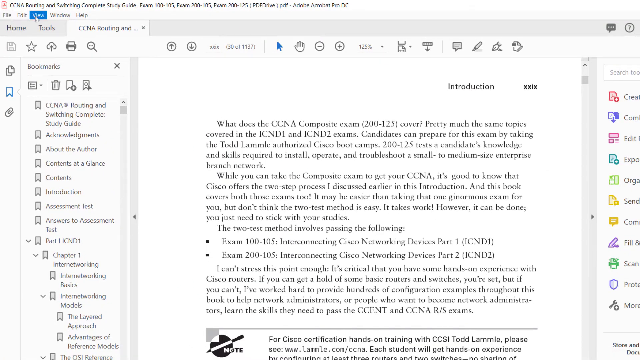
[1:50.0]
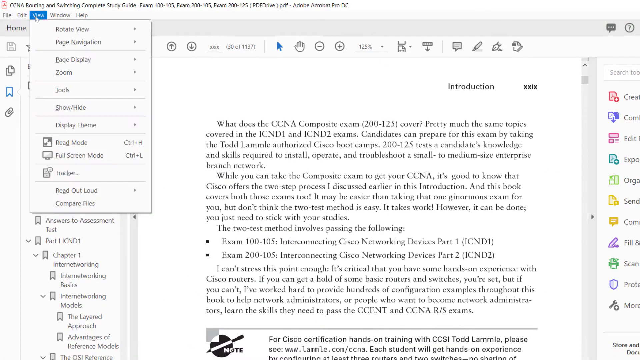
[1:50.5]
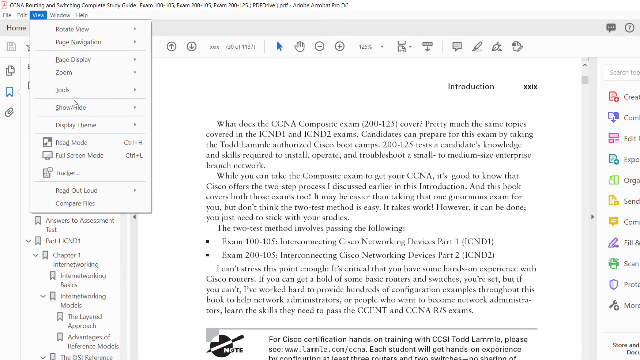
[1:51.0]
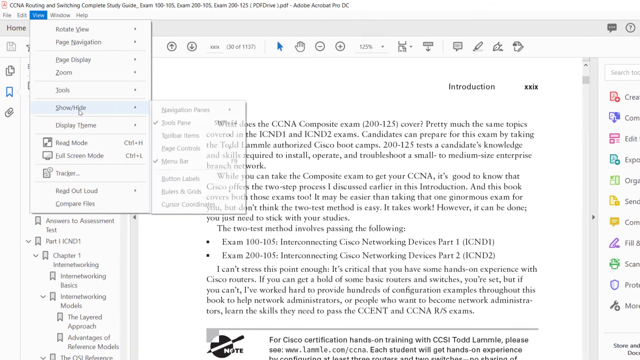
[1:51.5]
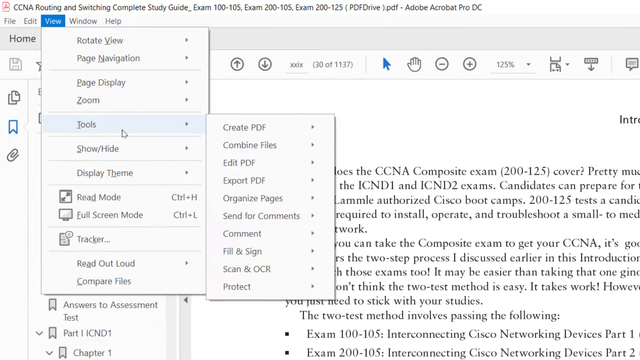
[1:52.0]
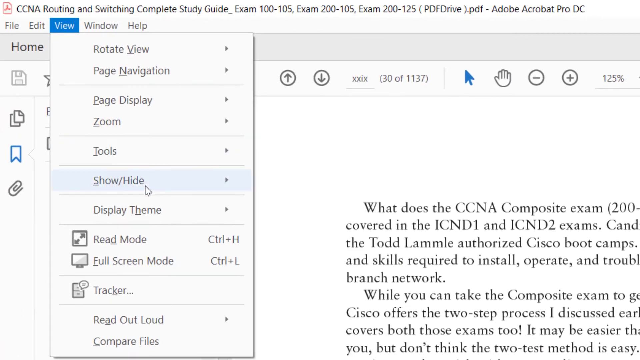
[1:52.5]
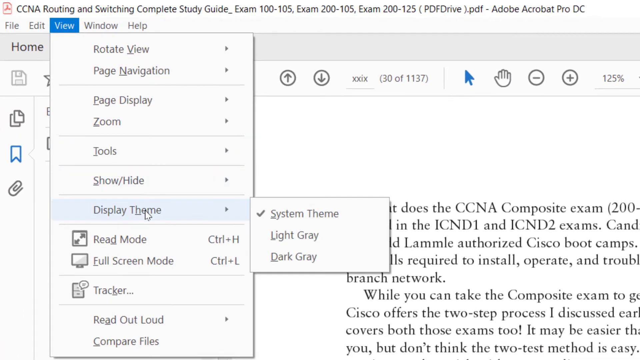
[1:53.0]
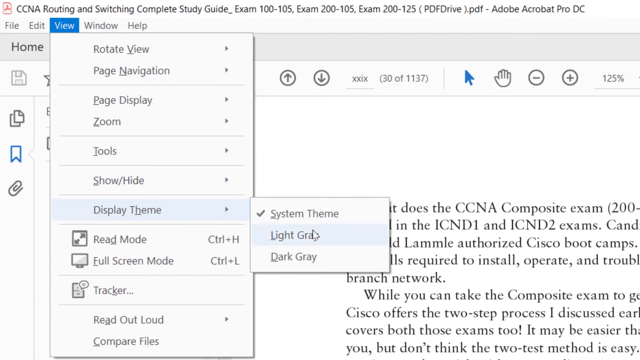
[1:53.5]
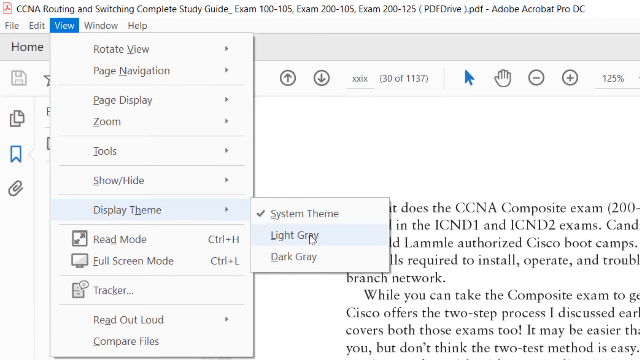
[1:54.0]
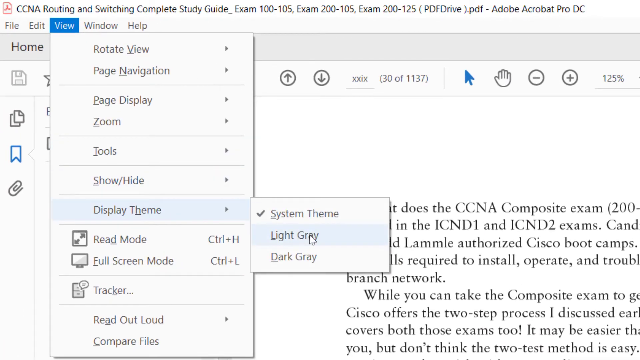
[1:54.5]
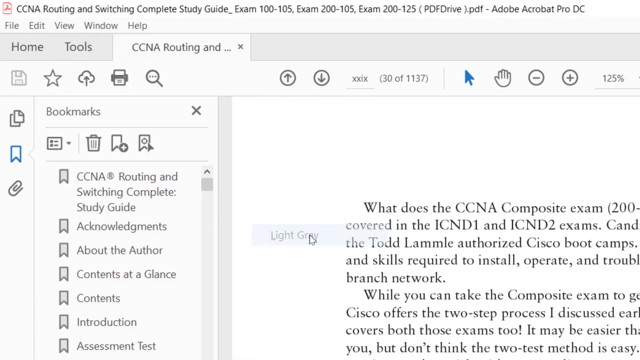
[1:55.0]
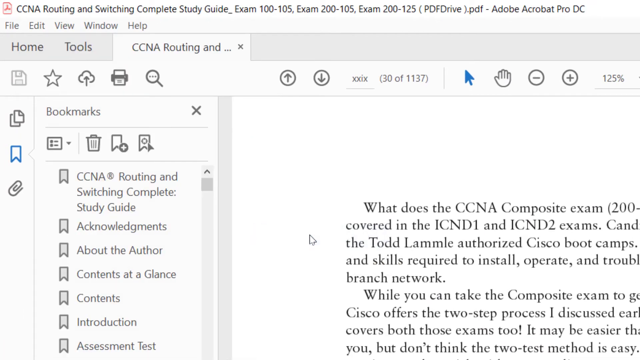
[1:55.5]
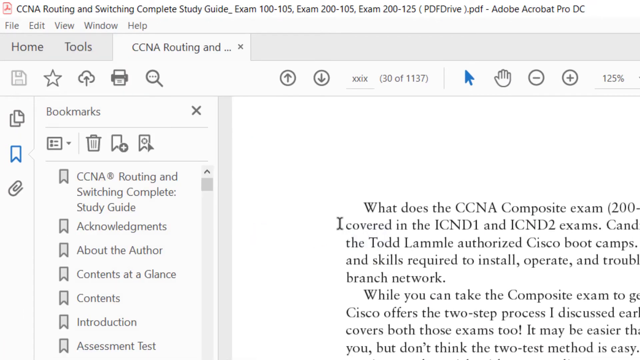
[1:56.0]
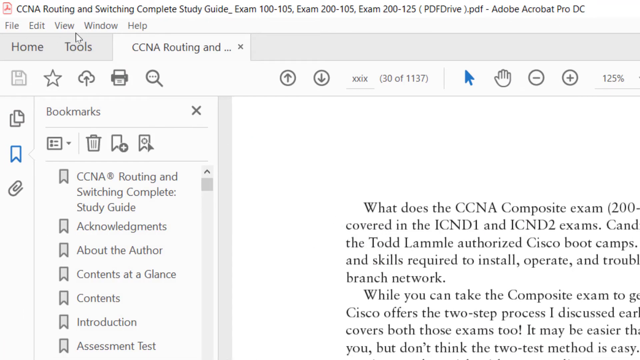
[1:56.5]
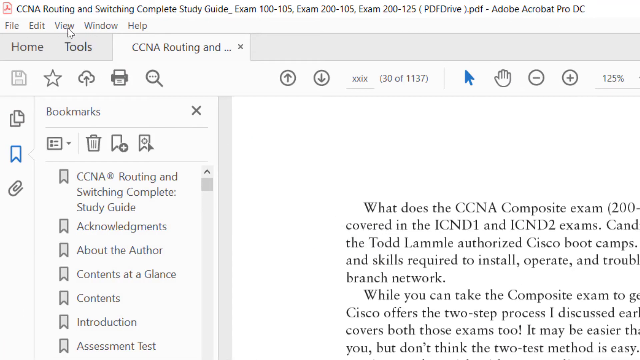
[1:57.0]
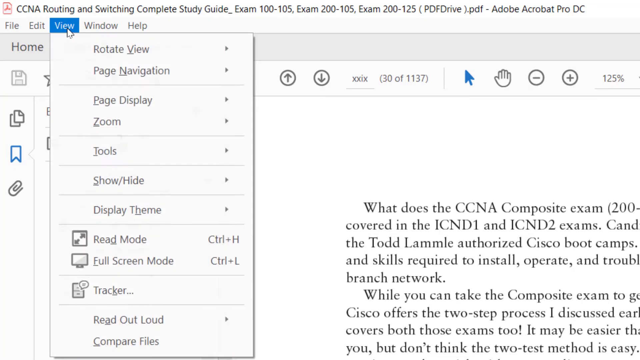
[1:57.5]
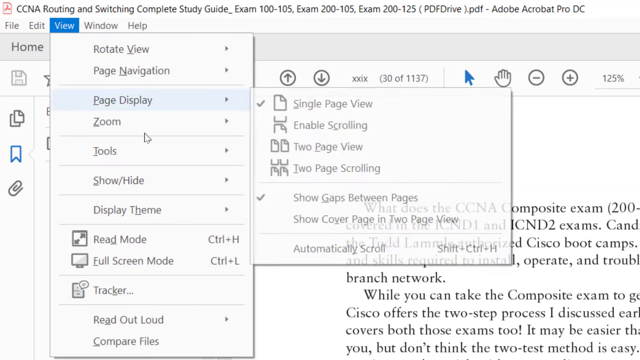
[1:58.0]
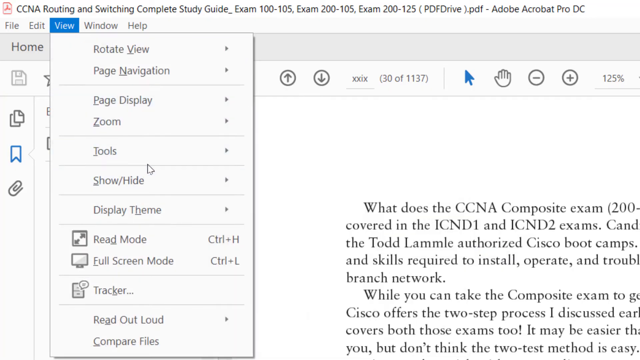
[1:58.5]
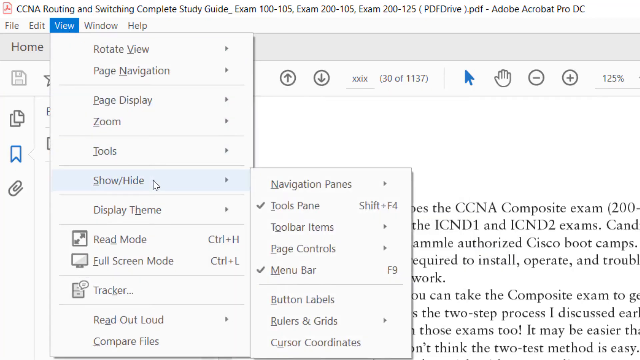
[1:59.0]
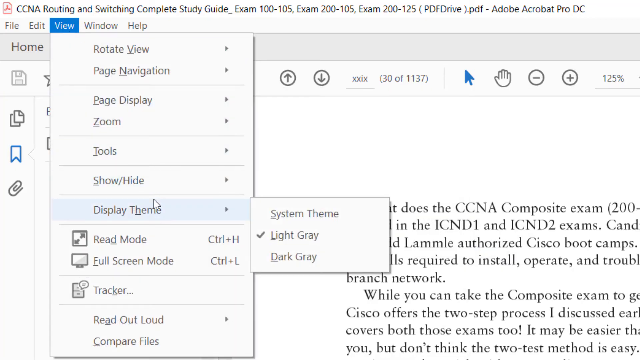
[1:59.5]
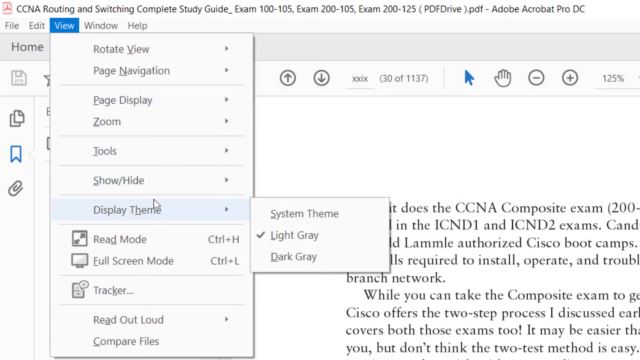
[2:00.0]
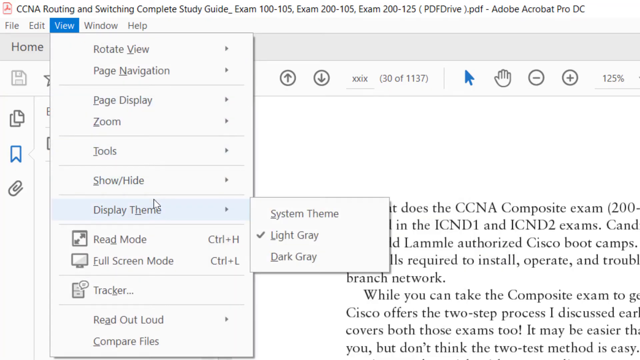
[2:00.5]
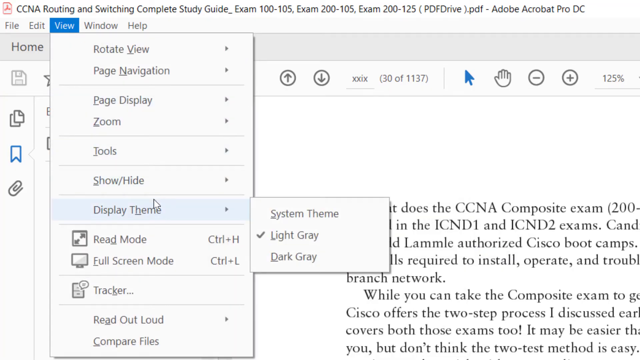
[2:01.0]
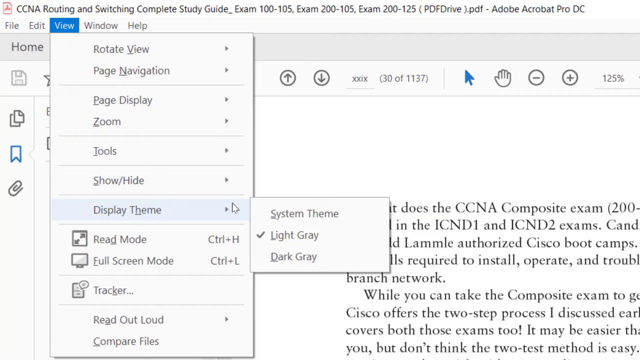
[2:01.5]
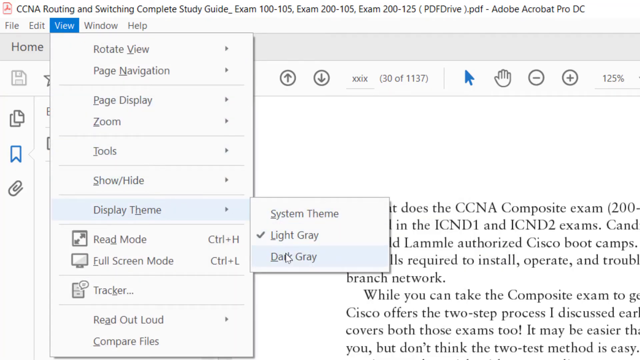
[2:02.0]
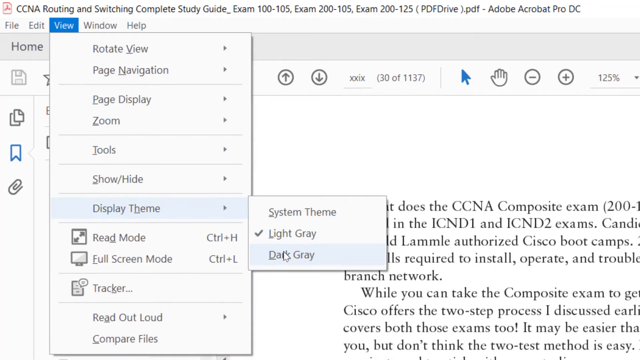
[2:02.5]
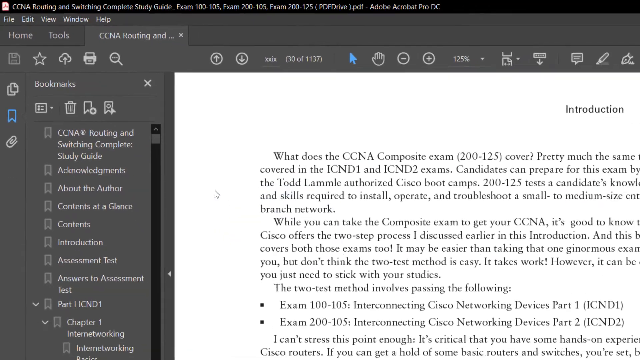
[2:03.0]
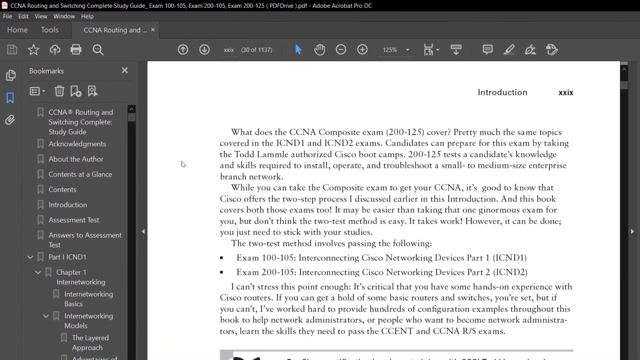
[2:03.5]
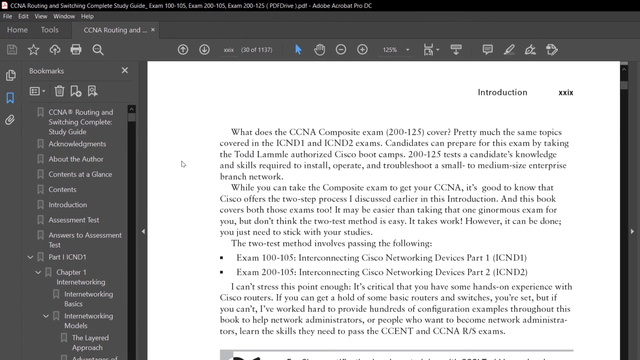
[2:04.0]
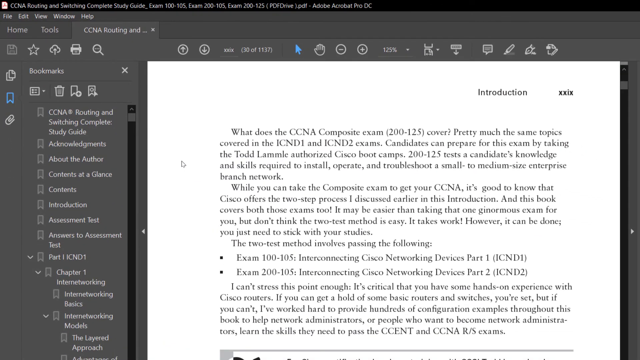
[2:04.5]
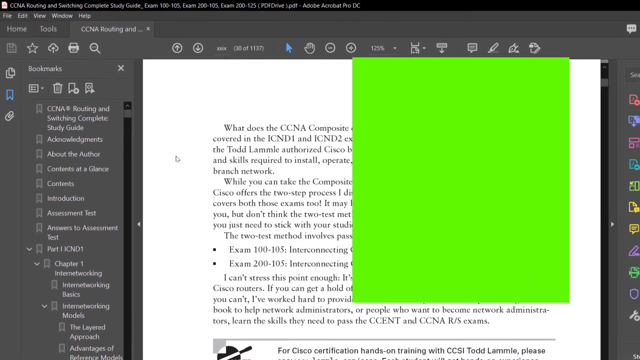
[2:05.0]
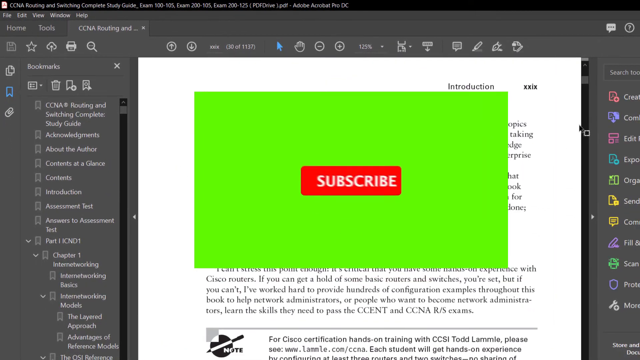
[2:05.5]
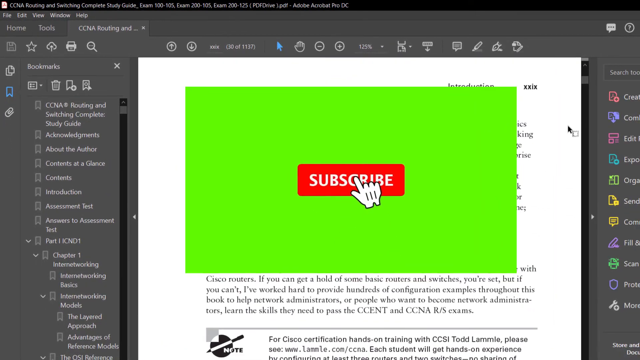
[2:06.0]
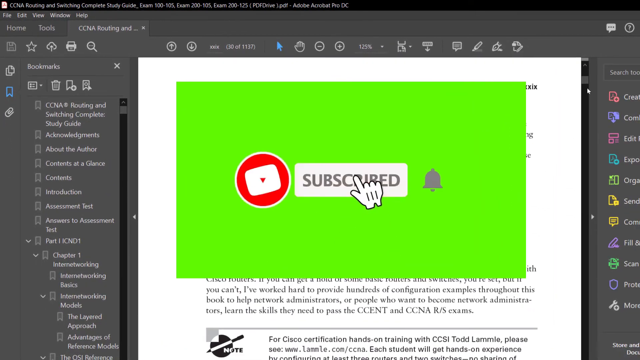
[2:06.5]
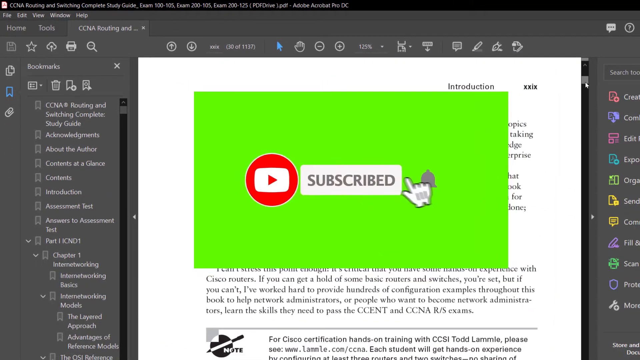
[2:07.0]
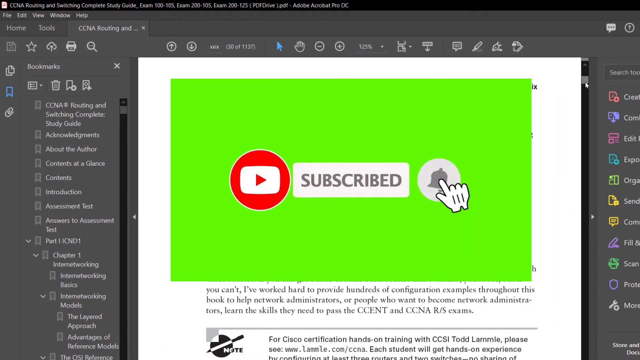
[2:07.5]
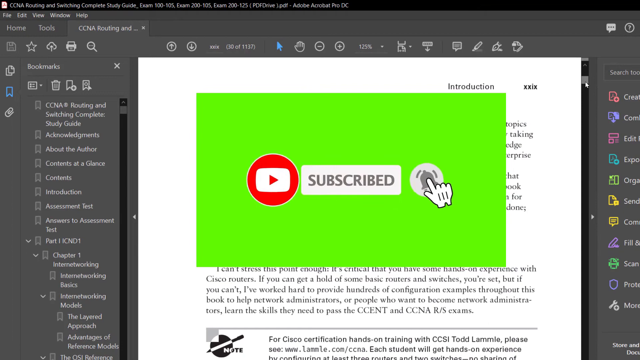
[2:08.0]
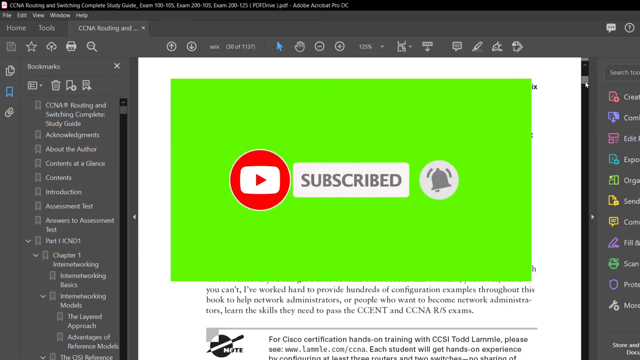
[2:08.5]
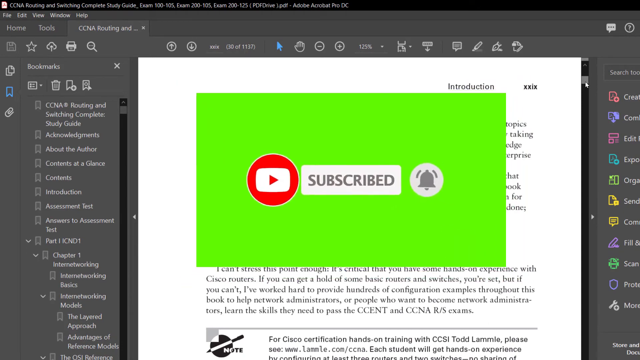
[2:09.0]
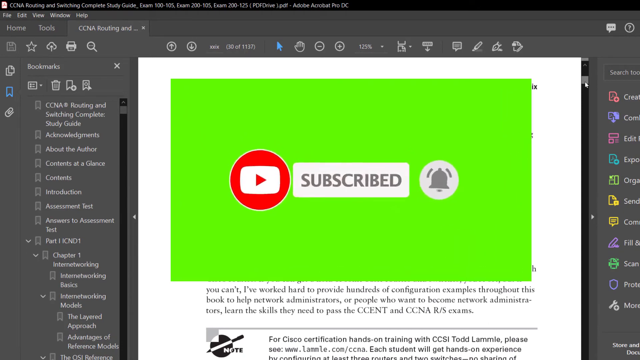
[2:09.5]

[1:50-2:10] The pointer clicks the view button again, and the pop-out box opens beneath it. The pointer scrolls down to "tools" as the view zooms in on that word, then moves a couple of lines below and clicks "display theme" again. The side pop-out box appears, and the pointer hovers over "light gray." Back at the view, there does not seem to be any change to the screen. The pointer goes to display theme again and clicks "dark gray" one more time, and the screen turns dark gray once again. In the middle, where the white document with the text is, a green neon rectangle with a red subscribe button appears, along with a white cartoonish finger pointing to subscribe. Once the subscribe button is clicked, it turns white and a YouTube logo appears to its left. The pointer moves over a bell to the right of the word subscribe, and the entire box moves in and out, coming closer and moving further away.